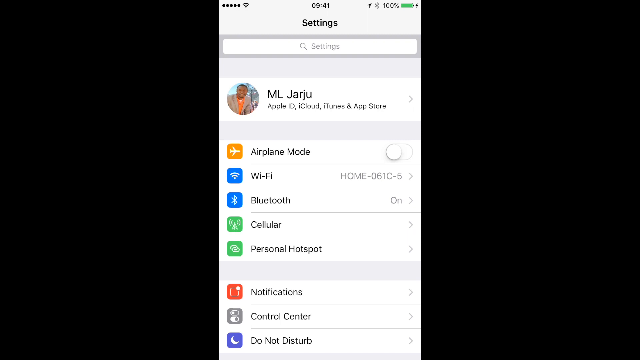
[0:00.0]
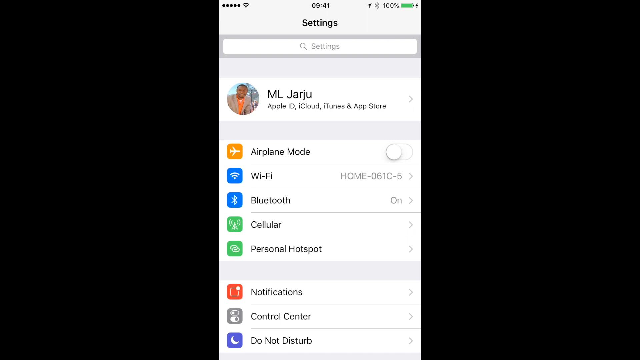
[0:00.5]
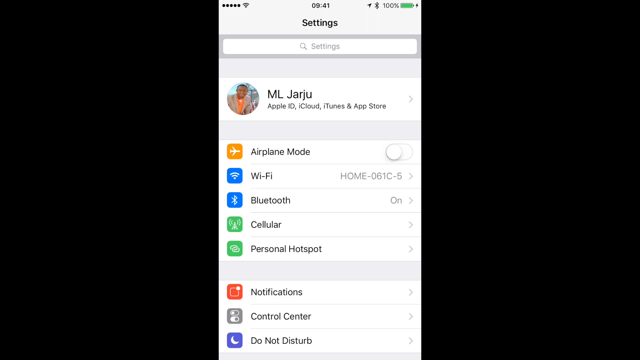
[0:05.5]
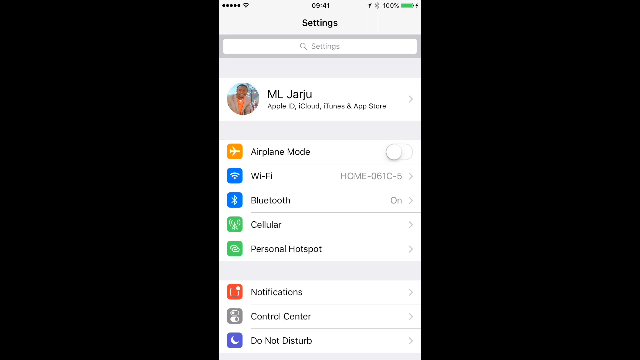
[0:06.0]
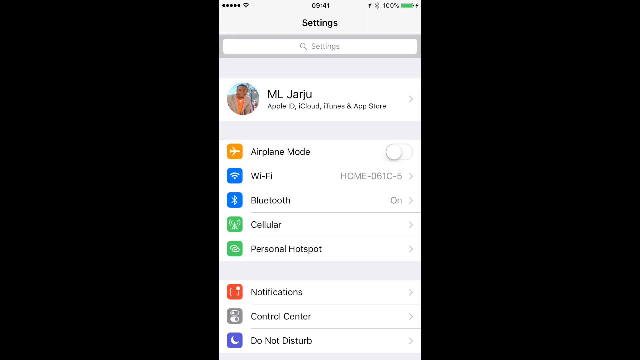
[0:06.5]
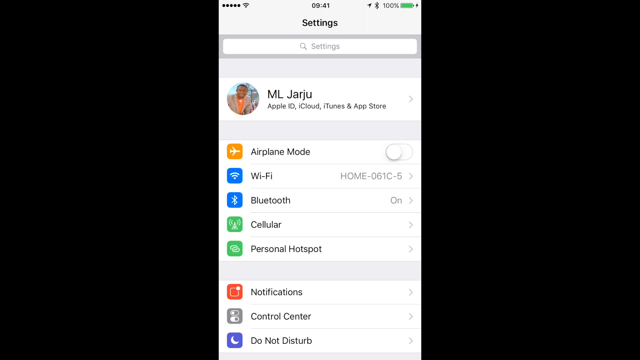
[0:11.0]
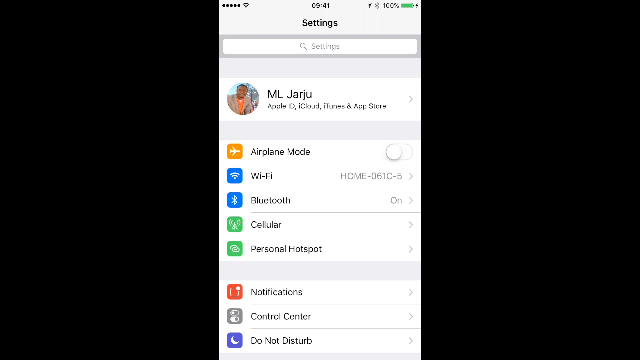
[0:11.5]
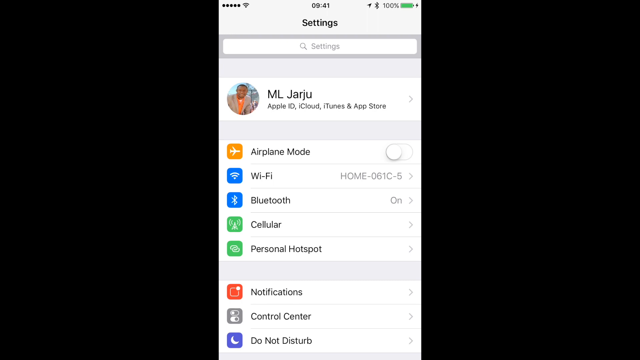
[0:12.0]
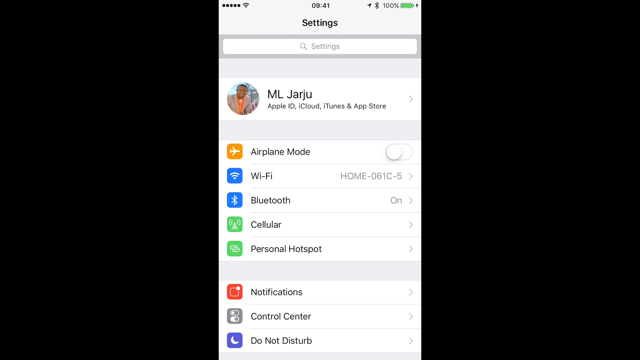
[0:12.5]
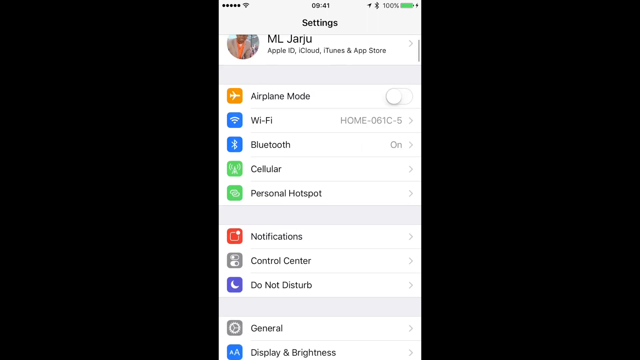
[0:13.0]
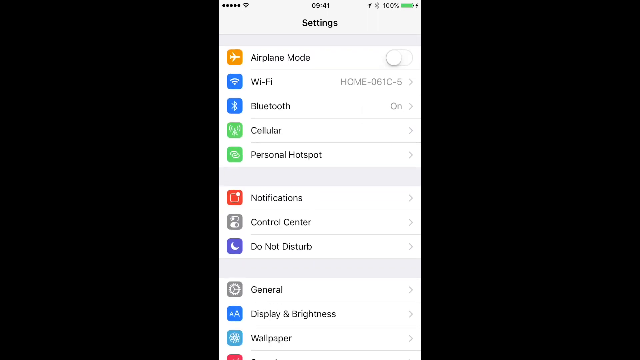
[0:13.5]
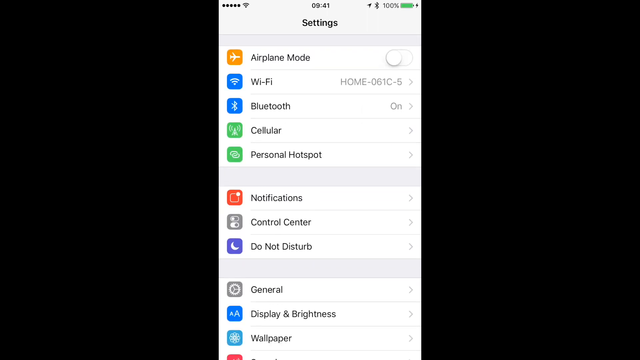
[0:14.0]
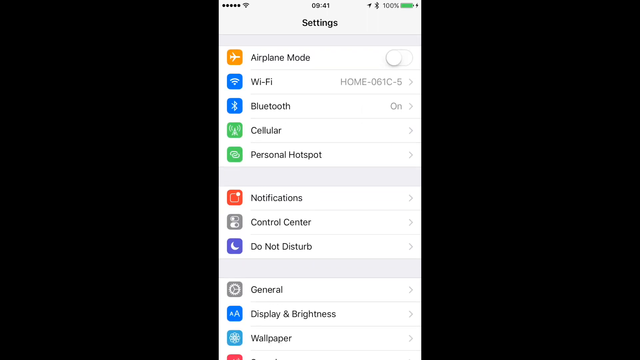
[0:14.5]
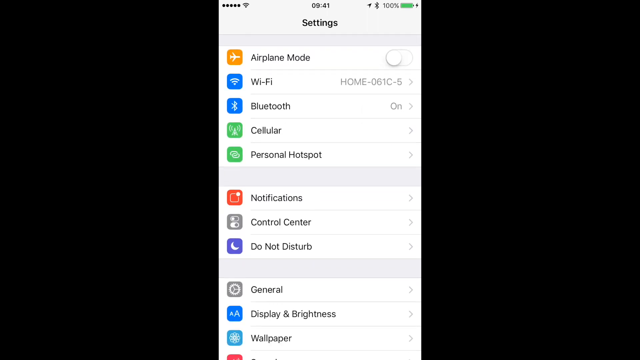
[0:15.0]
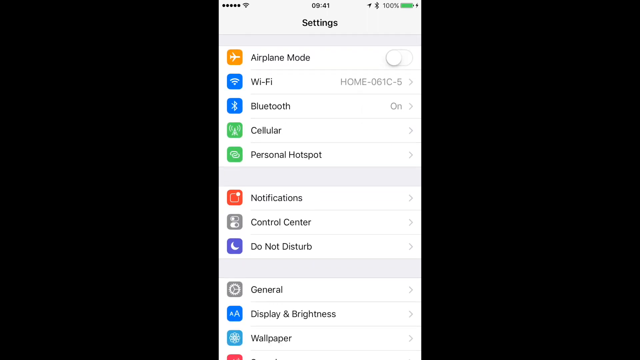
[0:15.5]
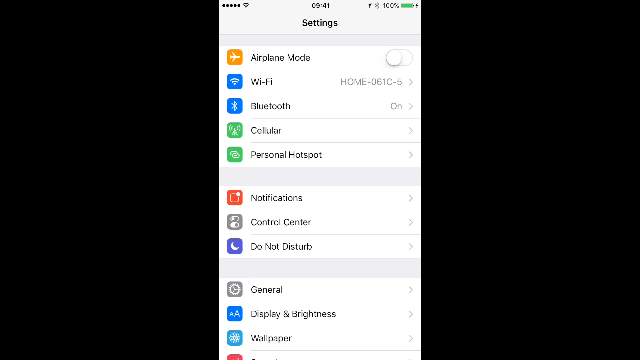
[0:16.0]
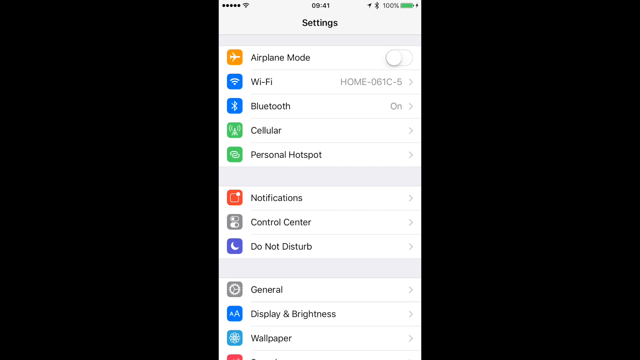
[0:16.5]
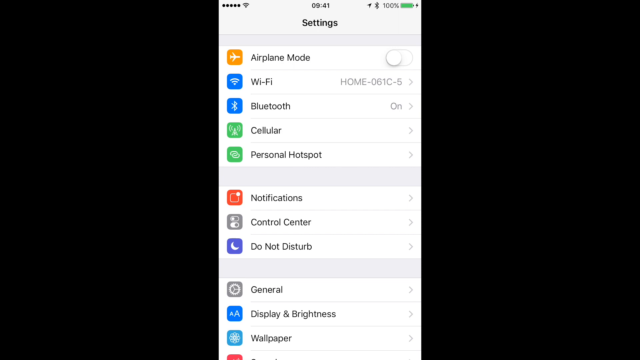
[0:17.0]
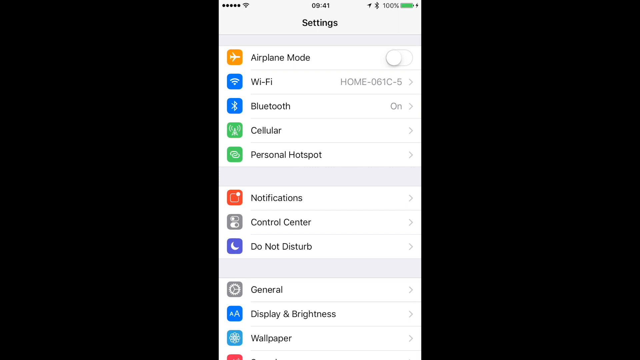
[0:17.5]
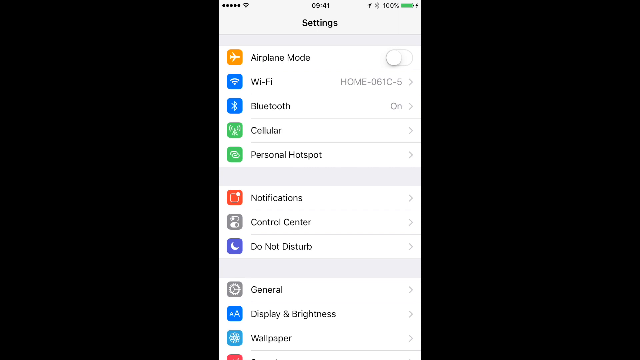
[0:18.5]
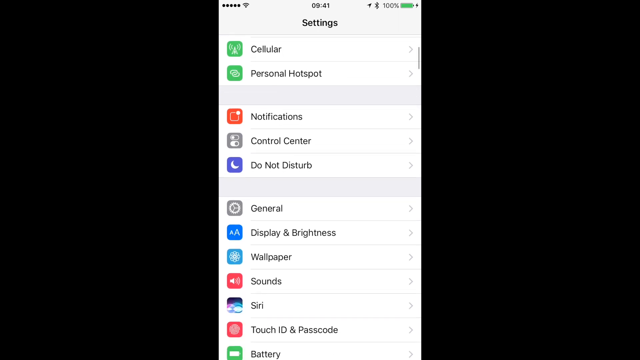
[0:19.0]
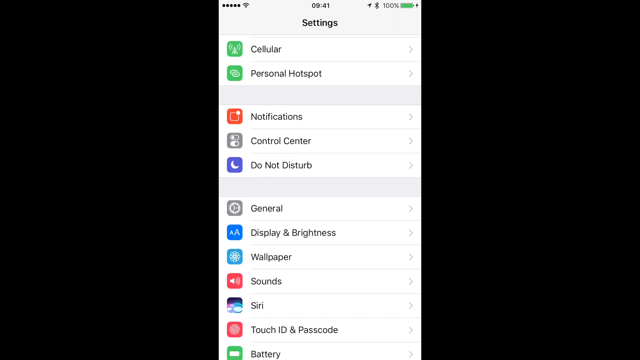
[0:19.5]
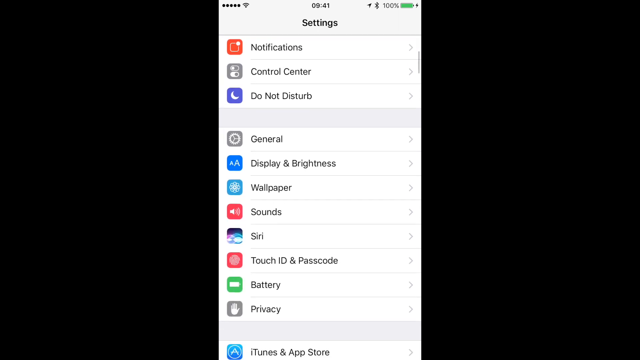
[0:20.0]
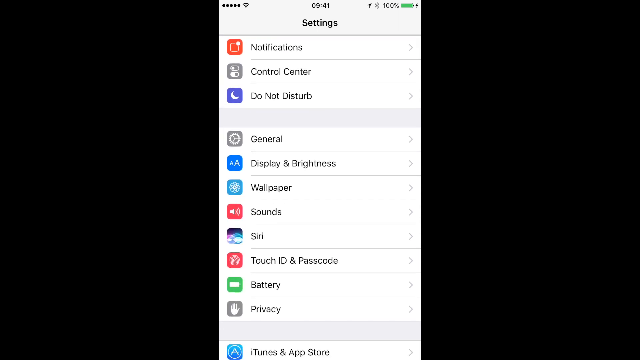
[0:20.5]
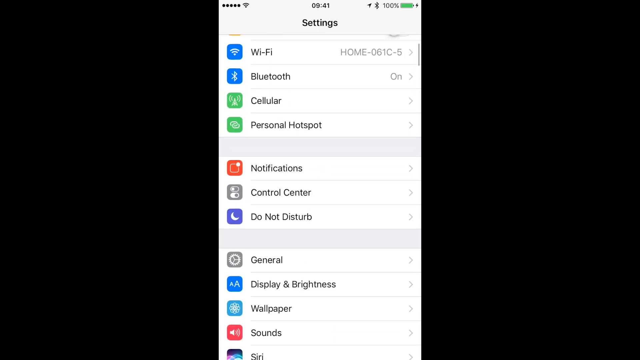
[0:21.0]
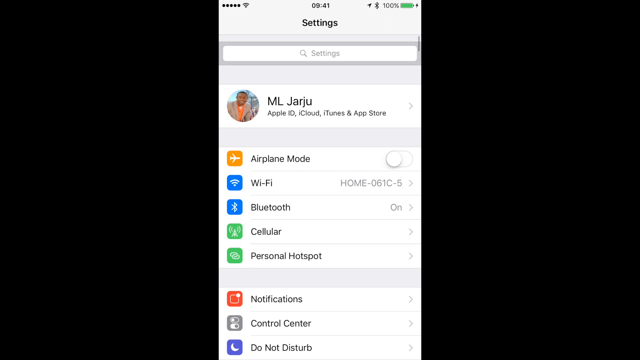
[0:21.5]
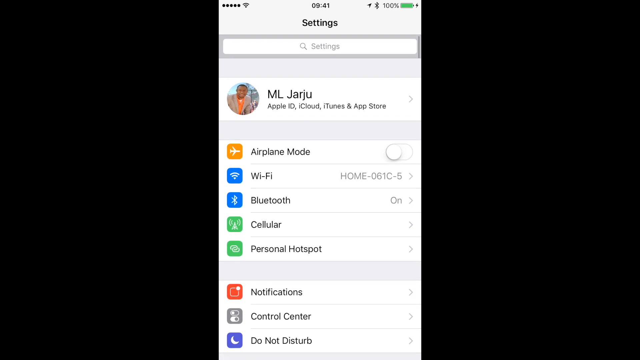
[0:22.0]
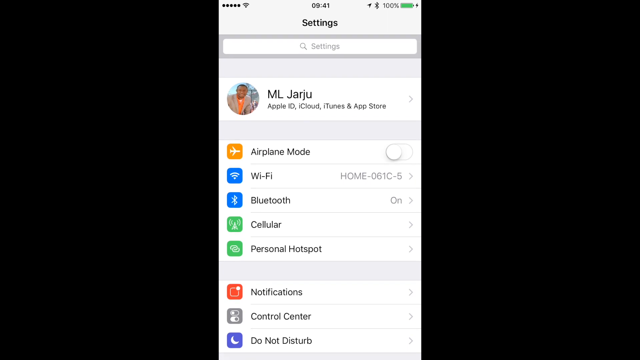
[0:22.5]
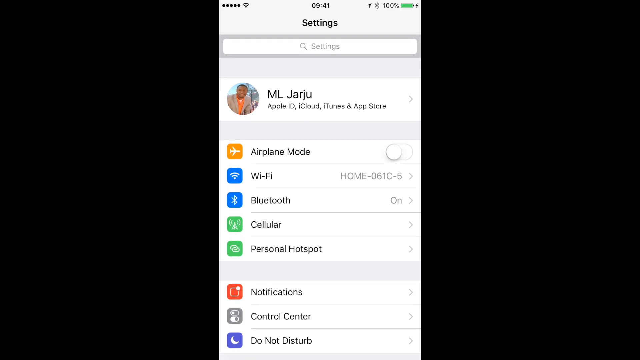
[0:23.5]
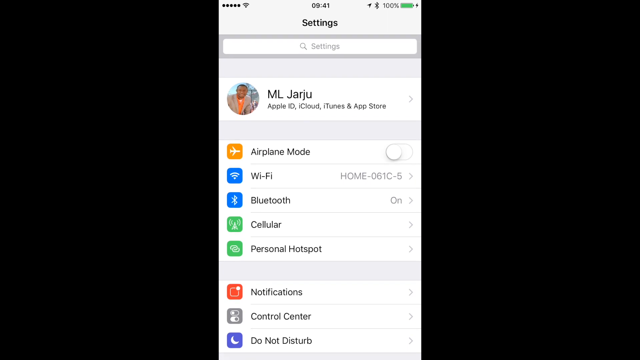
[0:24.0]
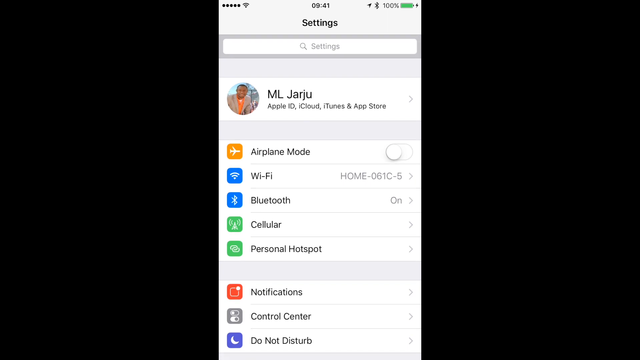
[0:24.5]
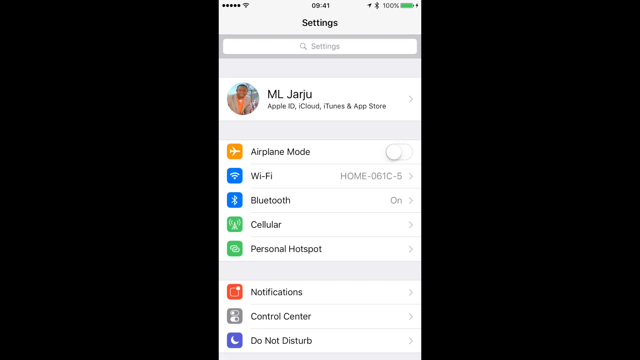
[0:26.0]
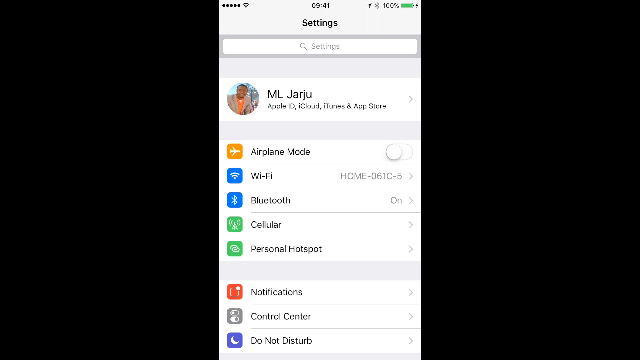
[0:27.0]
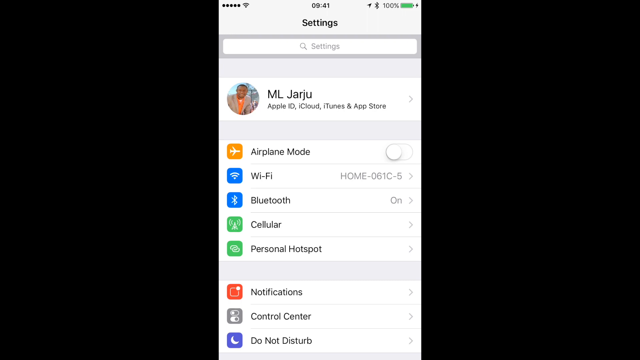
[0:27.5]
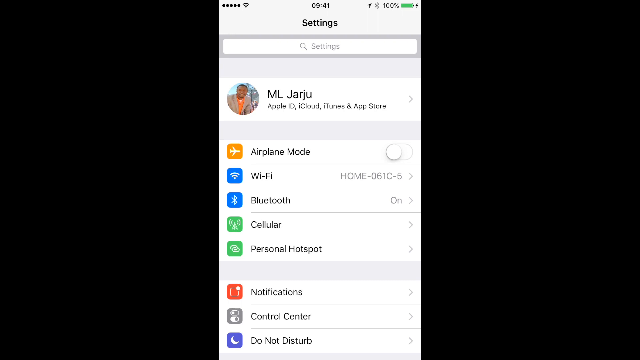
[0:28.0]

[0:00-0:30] A black background shows a screenshot of a mobile device in its center, the screenshot's background white. A Wi-Fi symbol is in the upper left corner and the time is at the top center, with a location symbol, a Bluetooth symbol and the battery percentage in the upper right corner. Beneath the time is a bold "settings" title, and under it a search settings box, followed by the owner's Apple ID section and options for airplane mode, Wi-Fi, Bluetooth, cellular, personal hotspot, notifications, control center and do not disturb. The screen stays still for several seconds with no movement or scrolling until, after a while, the user begins to scroll down slightly.